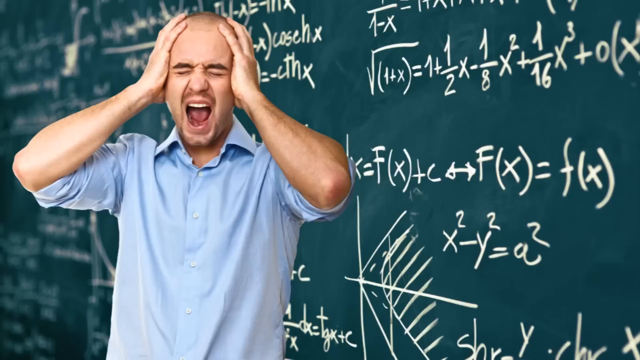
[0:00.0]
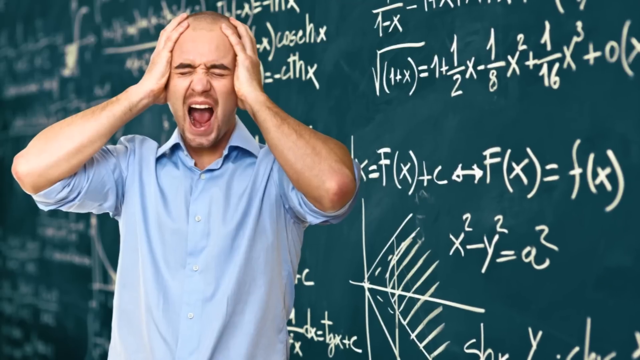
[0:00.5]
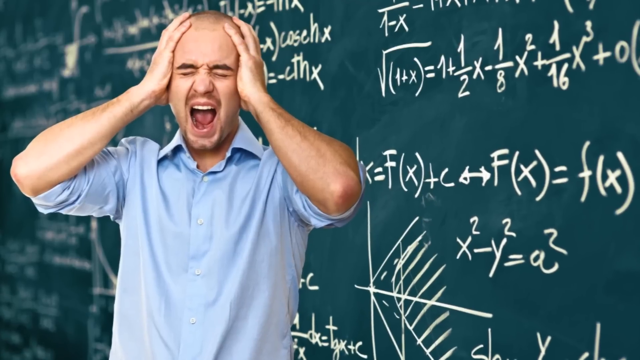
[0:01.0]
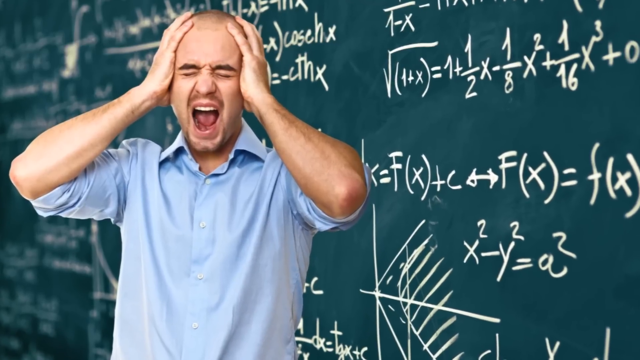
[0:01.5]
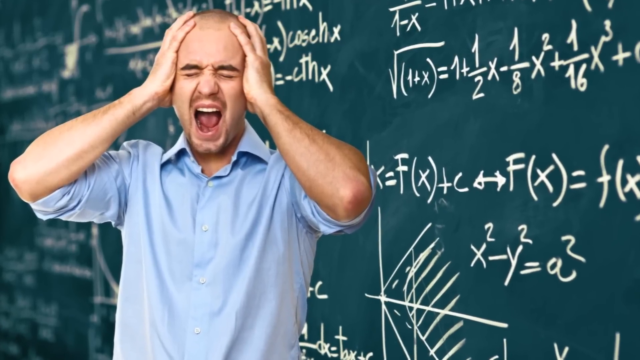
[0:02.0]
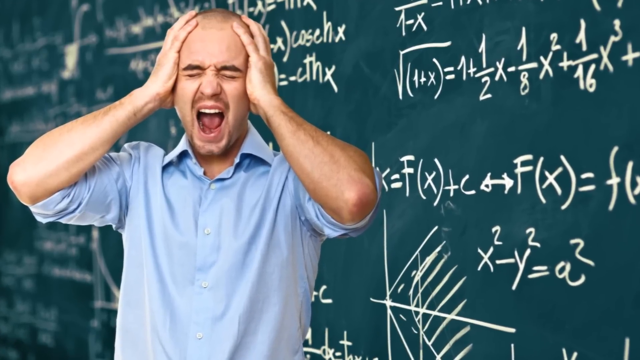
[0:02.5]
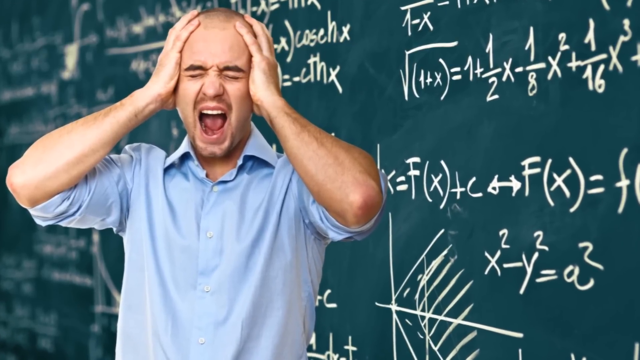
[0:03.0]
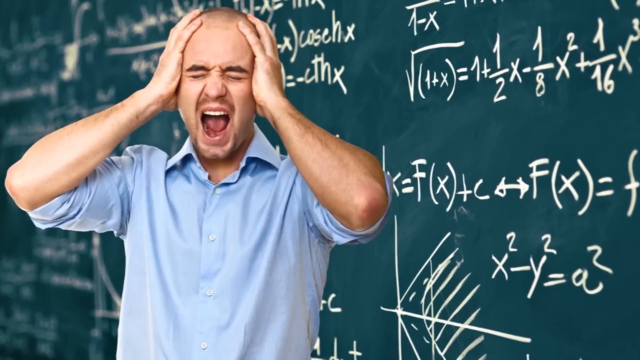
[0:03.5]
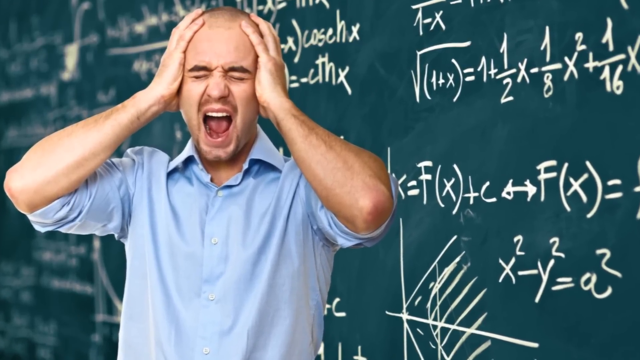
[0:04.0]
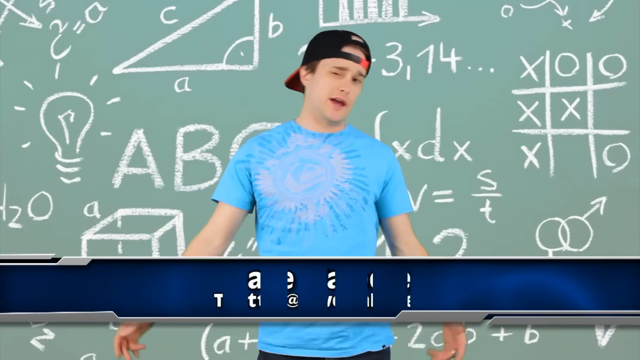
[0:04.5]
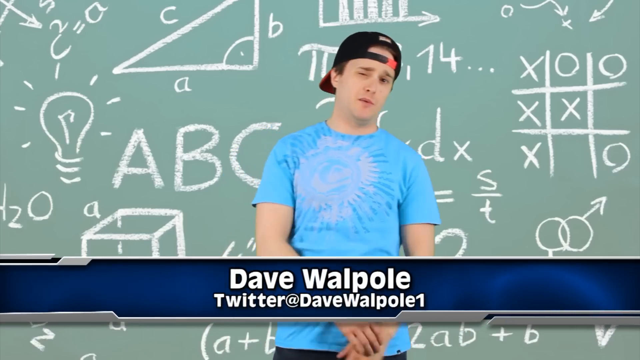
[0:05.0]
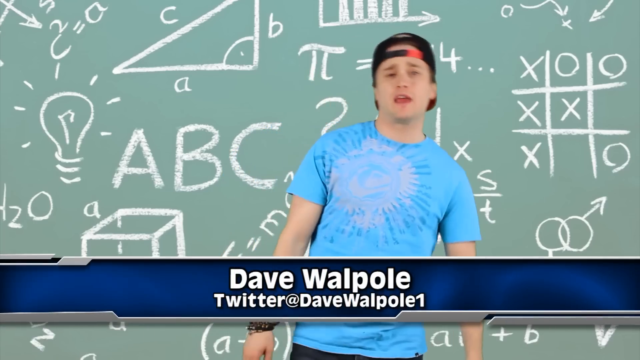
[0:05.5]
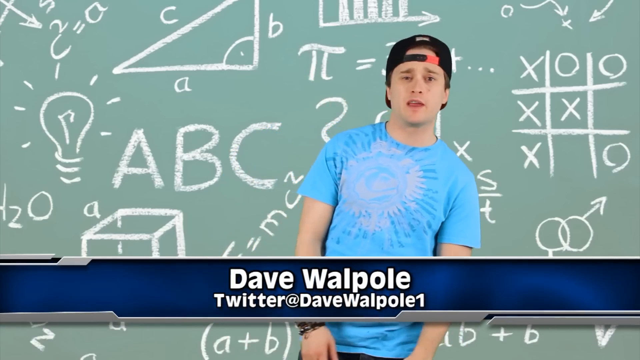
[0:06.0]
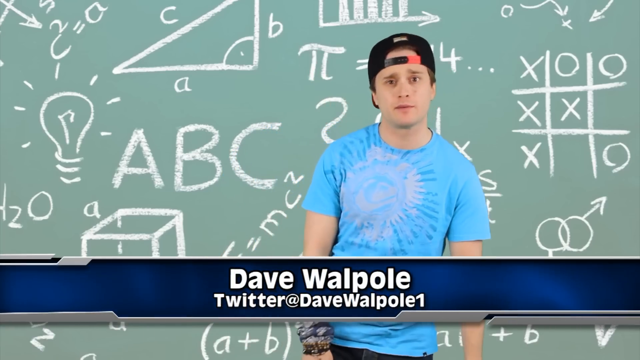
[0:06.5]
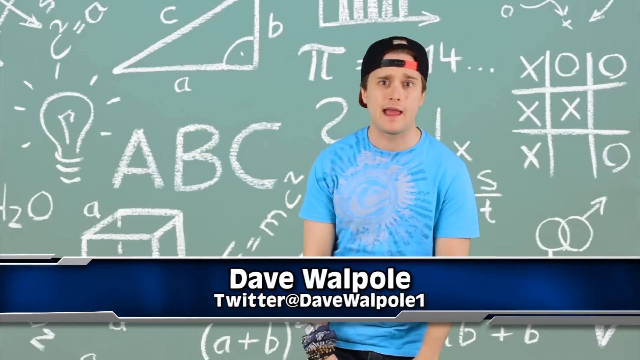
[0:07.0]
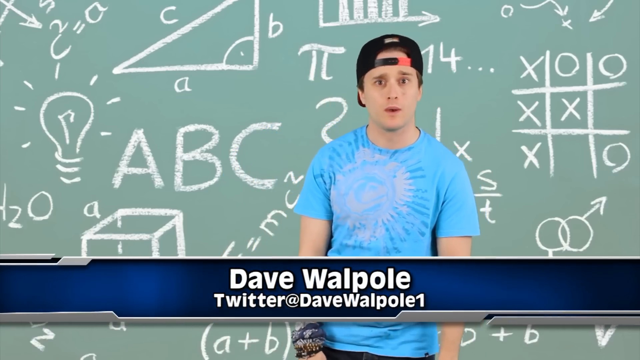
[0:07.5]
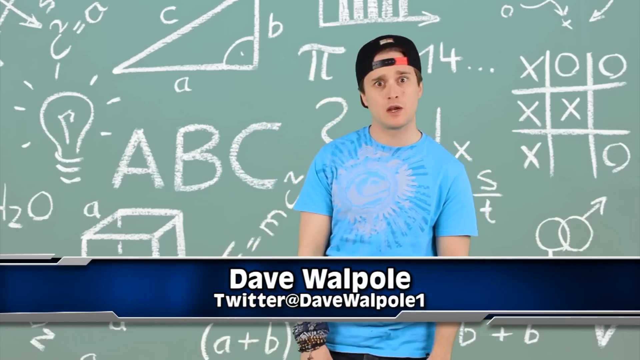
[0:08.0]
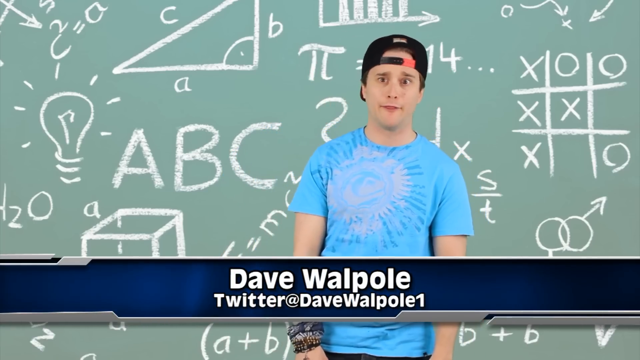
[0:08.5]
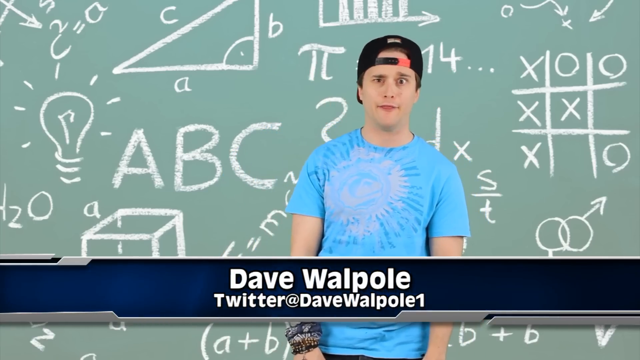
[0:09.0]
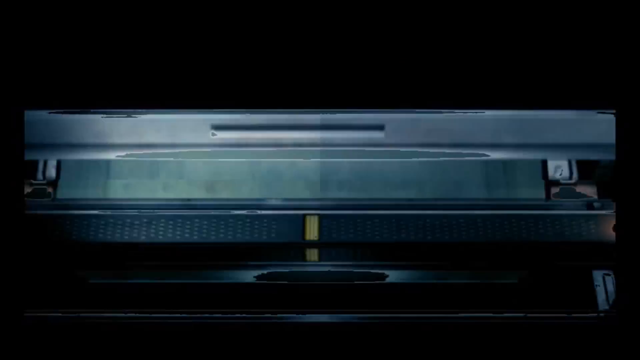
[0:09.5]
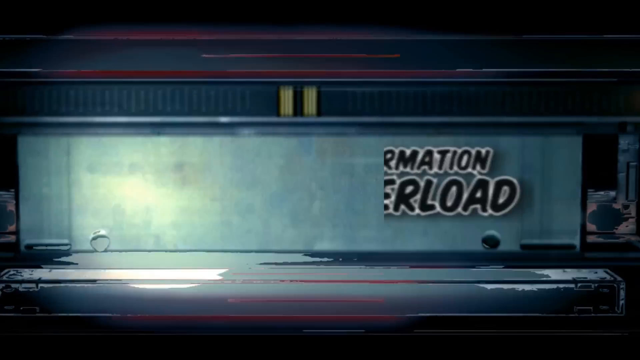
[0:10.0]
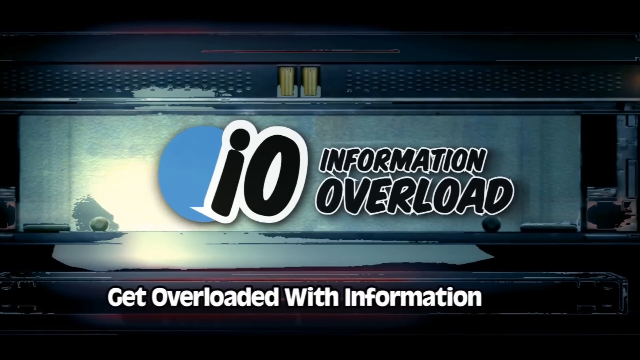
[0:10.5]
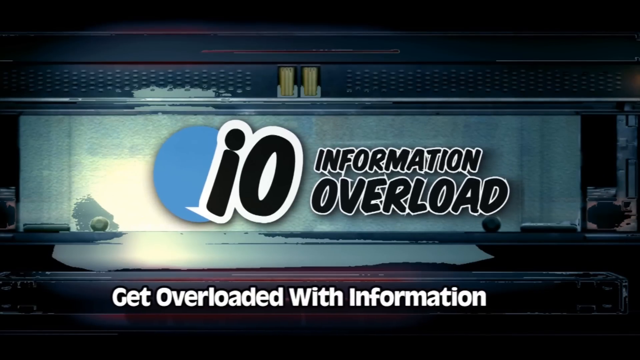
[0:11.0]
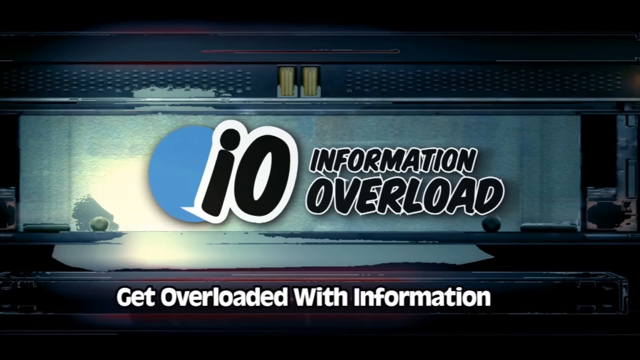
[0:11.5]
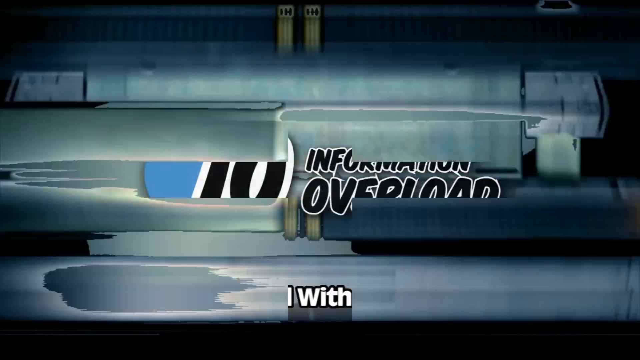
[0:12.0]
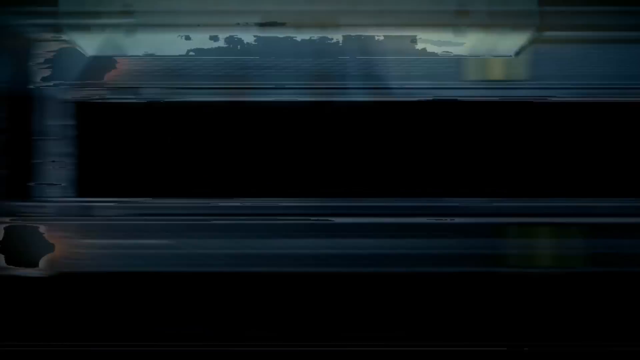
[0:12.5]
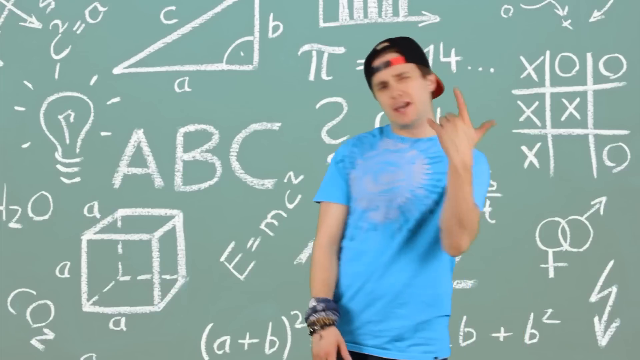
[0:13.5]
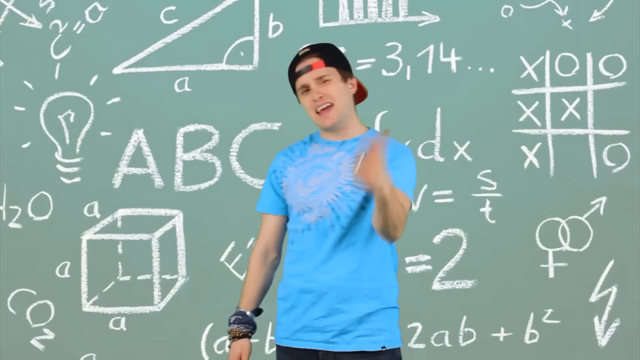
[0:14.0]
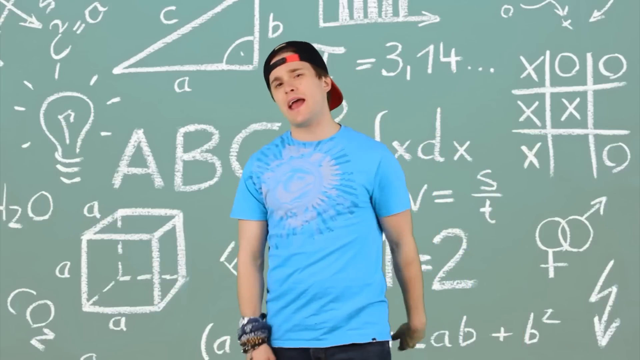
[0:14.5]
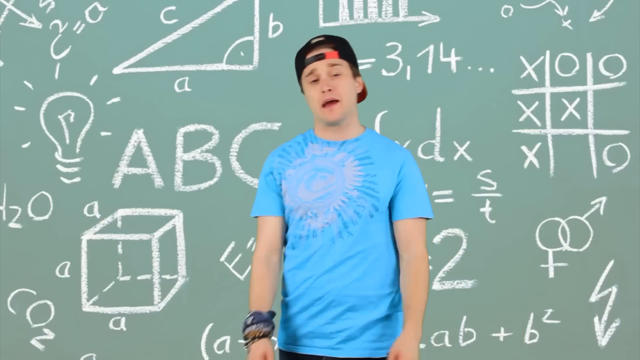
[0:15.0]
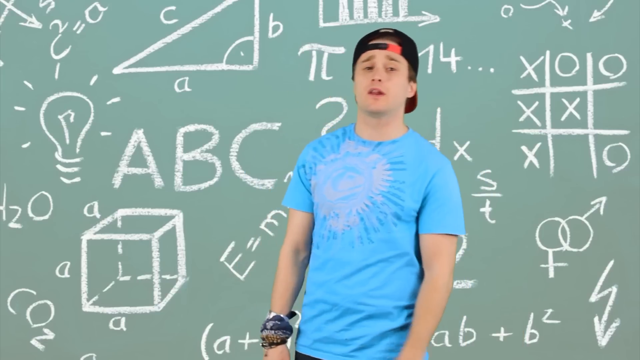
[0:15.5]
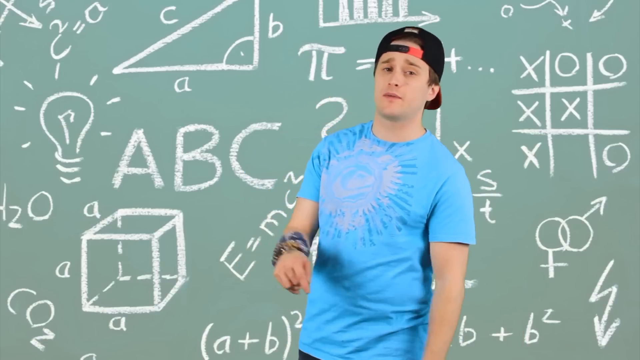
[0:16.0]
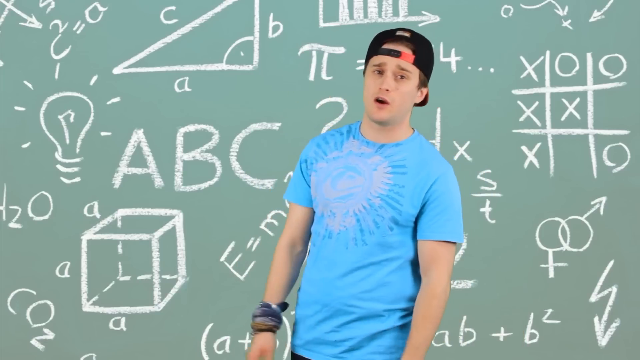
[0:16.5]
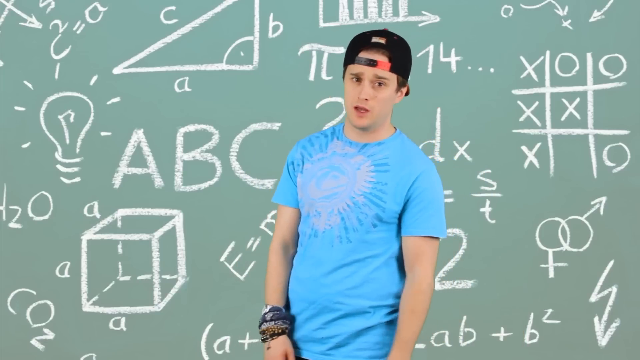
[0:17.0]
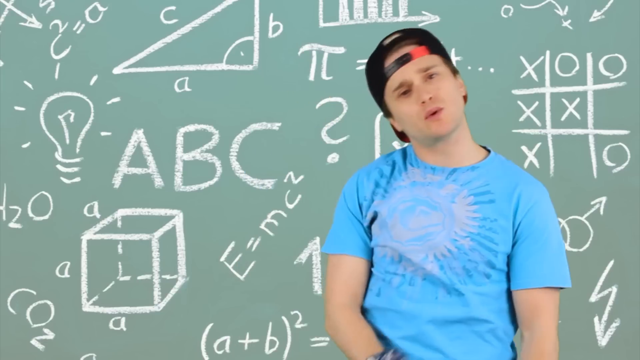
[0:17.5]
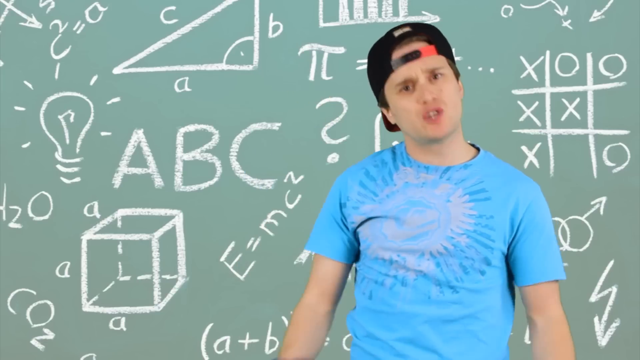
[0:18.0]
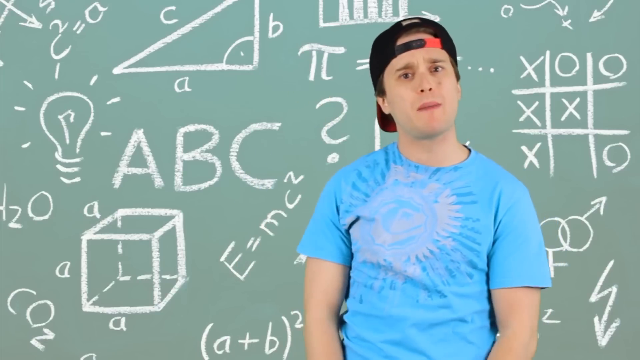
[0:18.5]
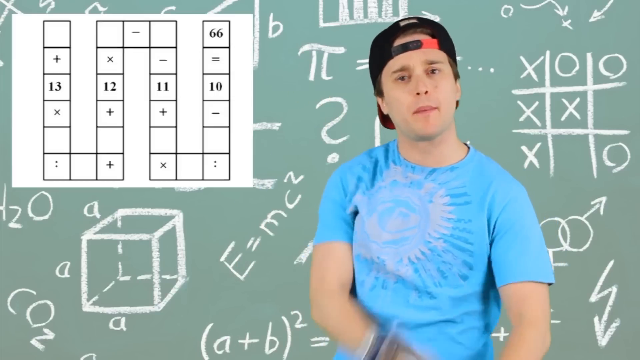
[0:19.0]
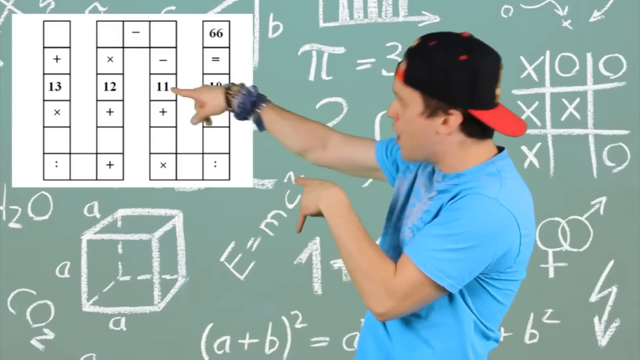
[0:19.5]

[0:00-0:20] A man stands in front of a chalkboard with his hands to his head; it looks like he is screaming, and he looks really frustrated. The camera zooms in a little to his face, and his eyes are shut. The video then moves to a person talking to the camera, whose name is Dave Walpole, with a Twitter handle at Dave Walpole one. He stands in front of equations on the board behind him. Next comes the header of the video, titled "IO information overload get overloaded with information", which then spins away, and the video returns to the man standing in front of the equation board. He is a young man wearing a baseball cap back to front and a blue t-shirt. He looks rather confident and cocky, with some attitude, and speaks quite confidently to the camera. He then points back at the screen, where a box with some numbers on it is up.